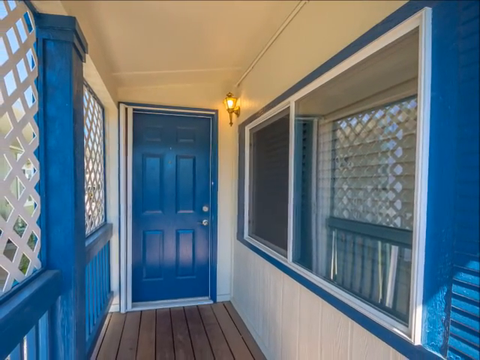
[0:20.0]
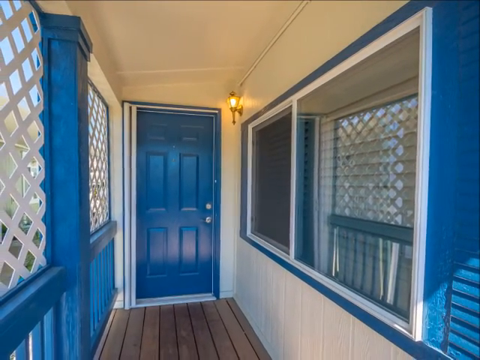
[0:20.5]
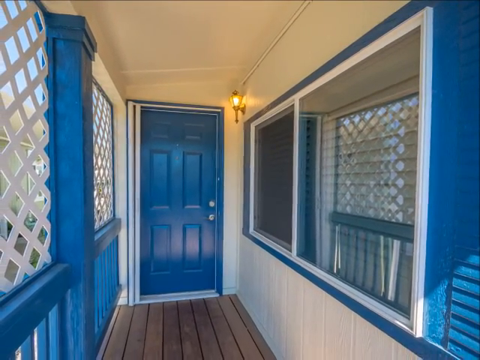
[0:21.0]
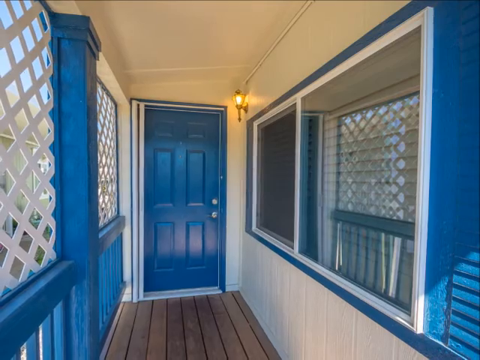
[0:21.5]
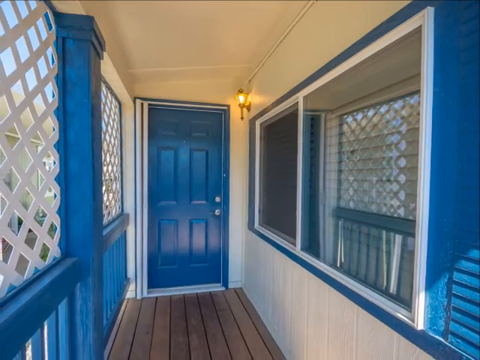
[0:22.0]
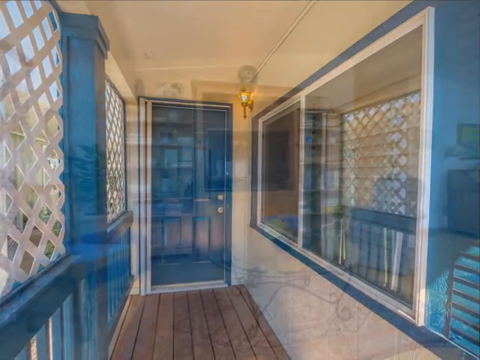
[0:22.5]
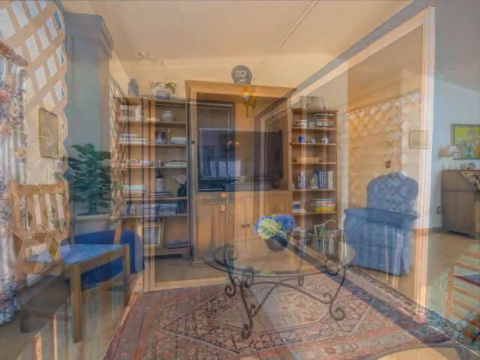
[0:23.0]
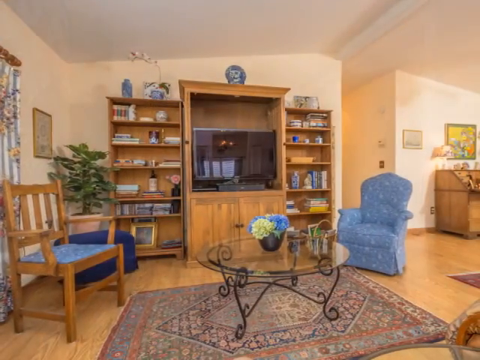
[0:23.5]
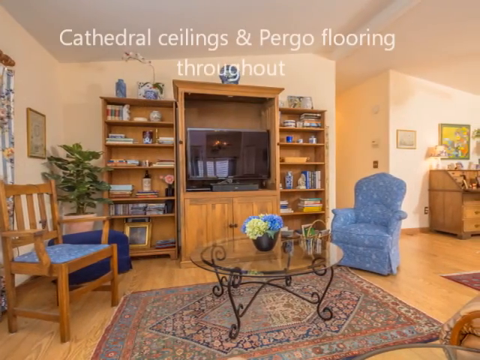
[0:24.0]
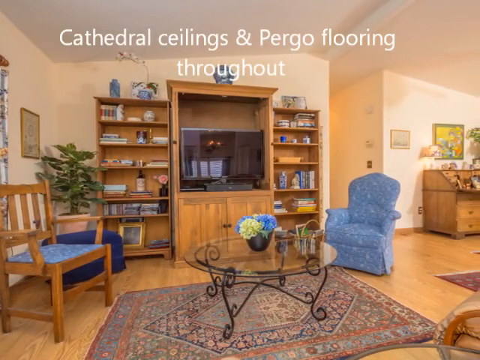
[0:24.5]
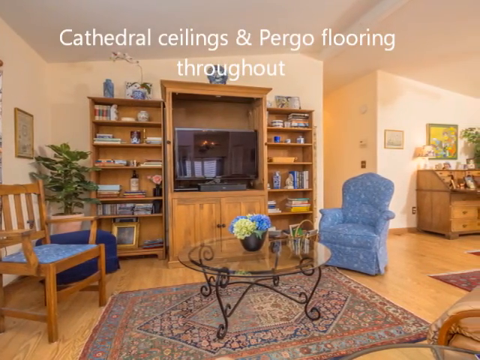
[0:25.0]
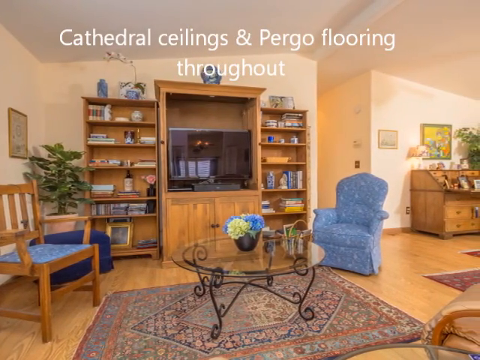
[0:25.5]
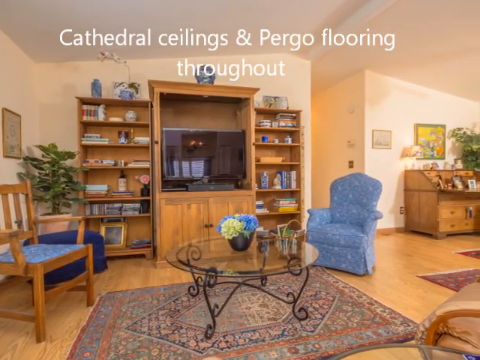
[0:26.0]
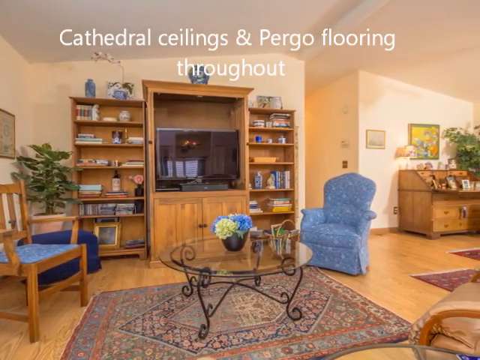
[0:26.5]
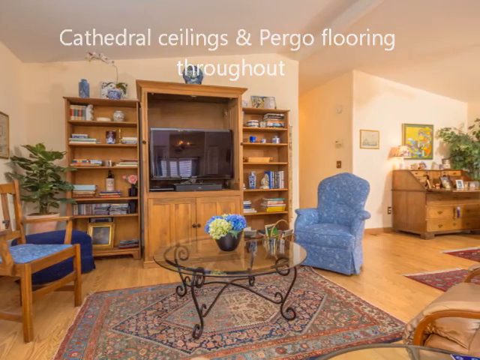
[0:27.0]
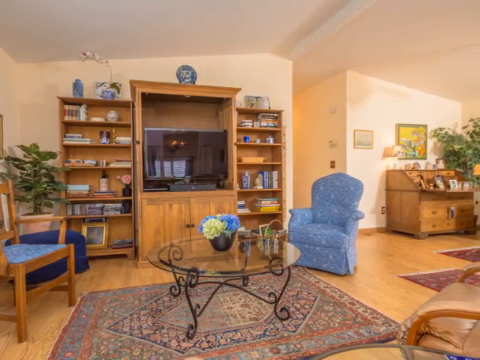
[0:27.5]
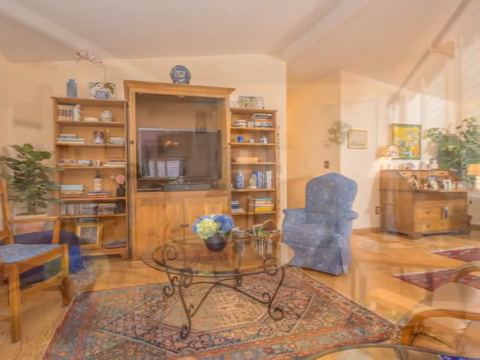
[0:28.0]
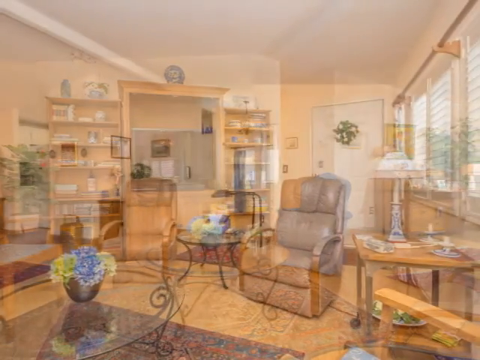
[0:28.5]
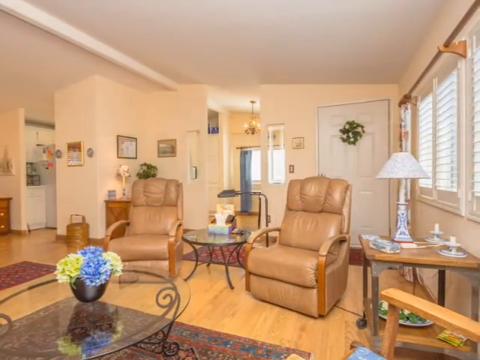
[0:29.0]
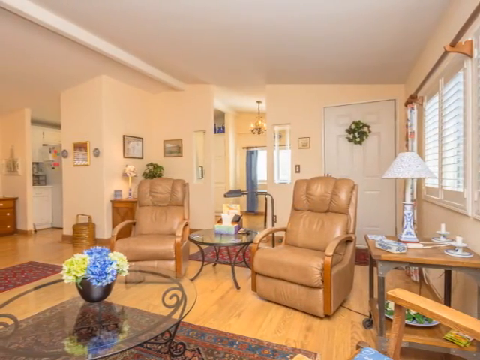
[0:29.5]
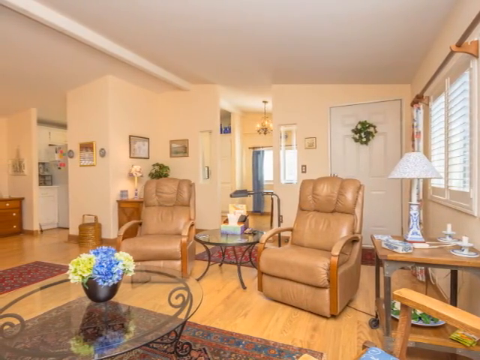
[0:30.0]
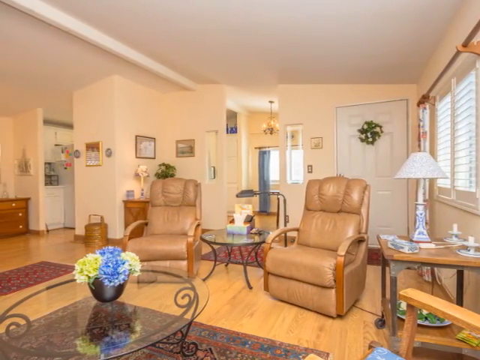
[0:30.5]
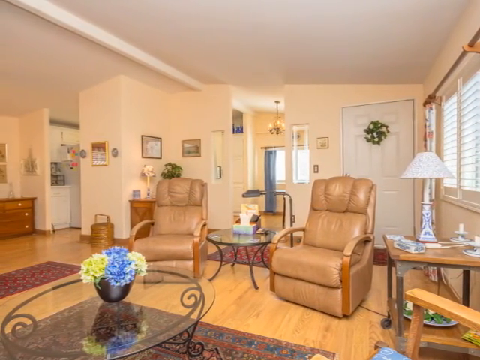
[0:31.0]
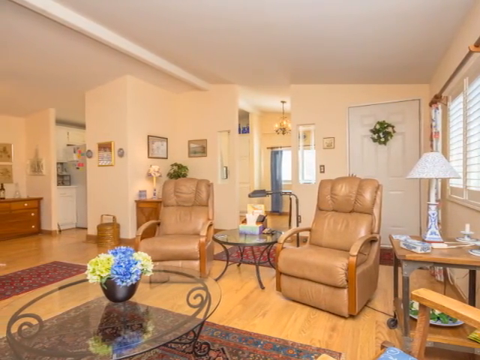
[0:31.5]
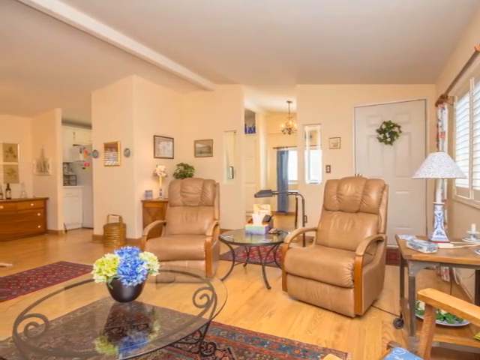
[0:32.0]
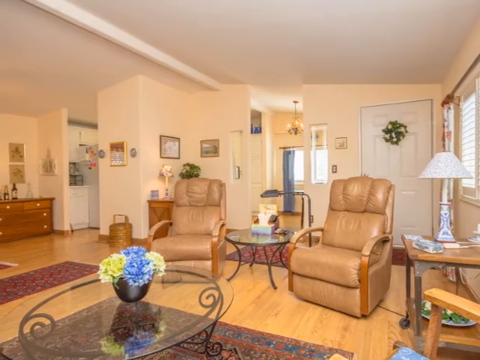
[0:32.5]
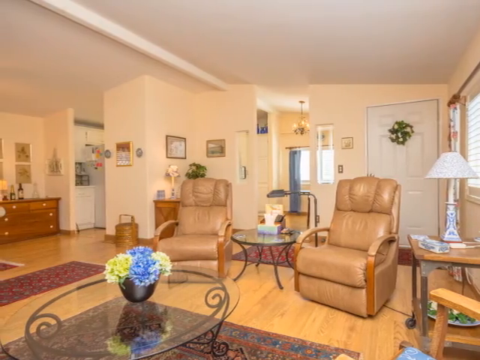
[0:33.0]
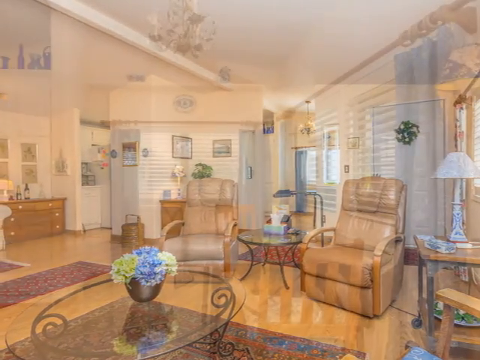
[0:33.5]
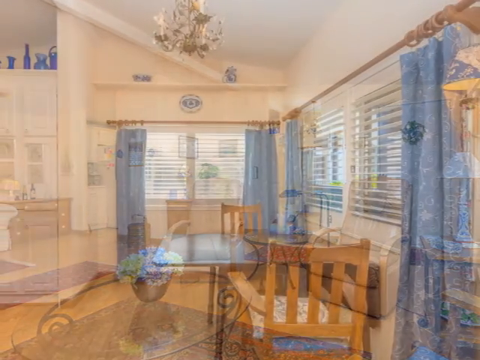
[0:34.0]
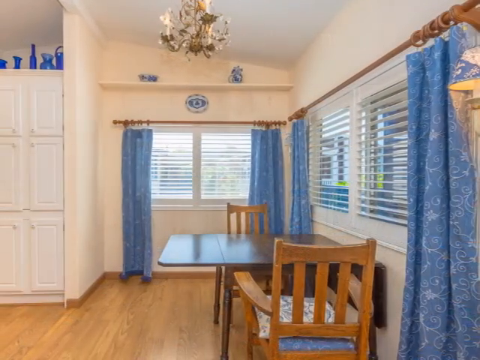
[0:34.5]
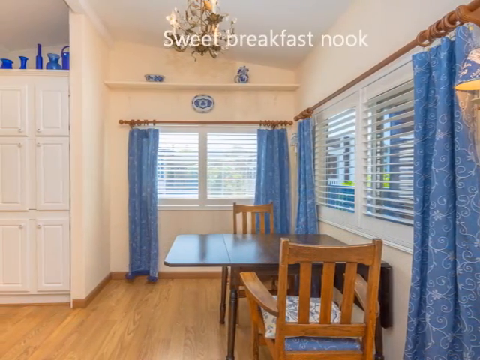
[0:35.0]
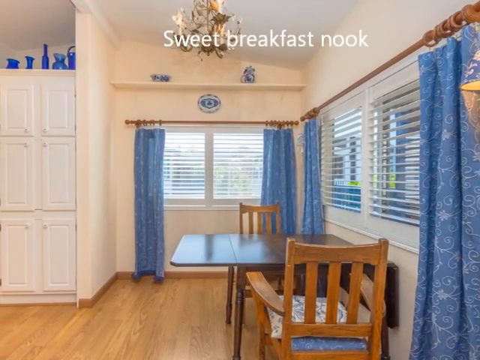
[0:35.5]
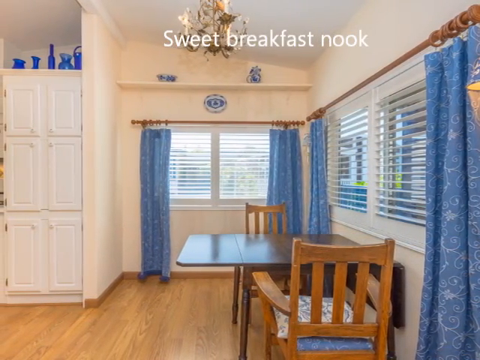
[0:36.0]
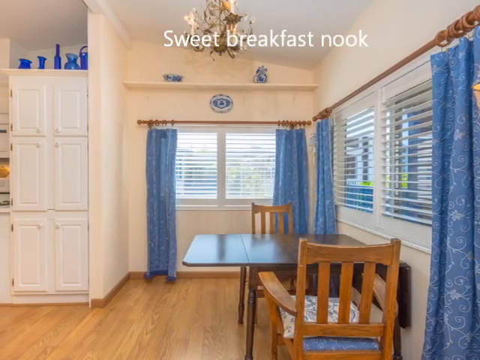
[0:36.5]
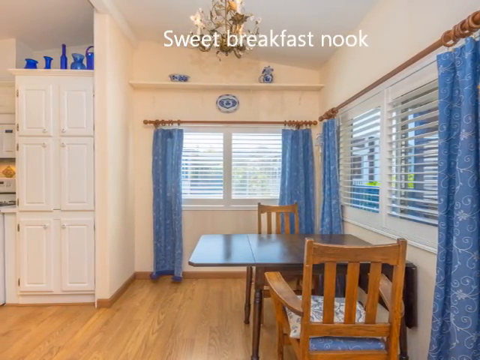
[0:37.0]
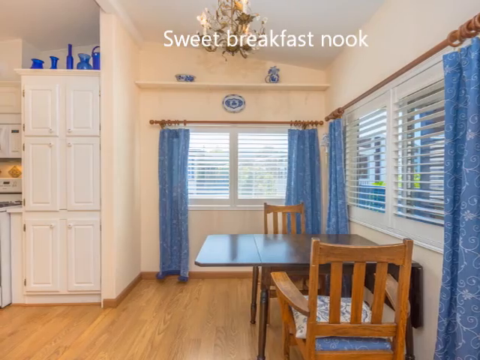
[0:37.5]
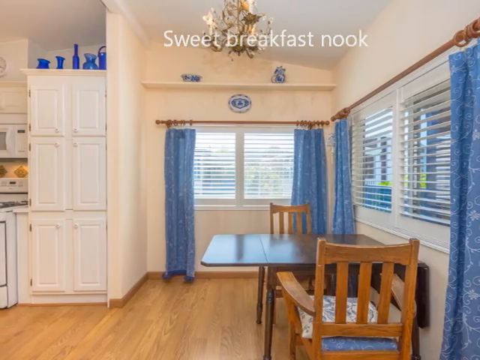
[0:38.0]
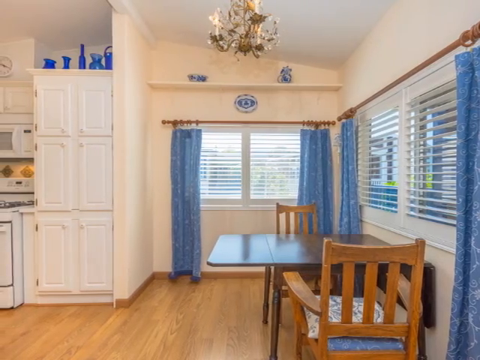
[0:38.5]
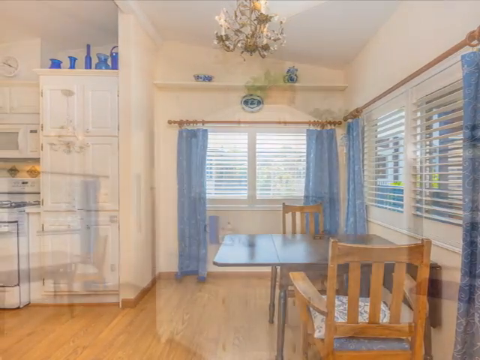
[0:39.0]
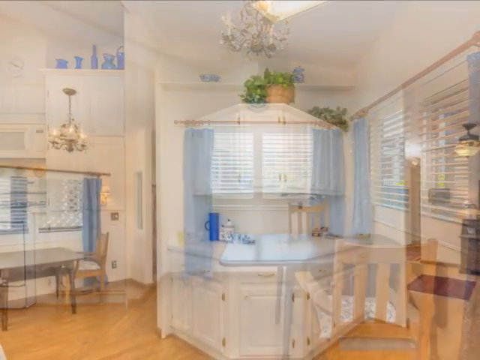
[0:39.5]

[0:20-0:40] Inside the house, the home has cathedral ceilings and pergola flooring throughout. The view moves from the living room, which appears to be a decent size, to what appears to be a seating area. Moving from left to right, there is a small area in the kitchen with room for a small kitchen table. The kitchen cabinets appear to be white with white countertops, and on the outside of the building there is a bright blue door. There appears to be a small hallway, and the walls appear painted a light beige or light tan. In one area the kitchen cabinets appear to go three high, and the appliances may be white as well; a white microwave is visible in the background along with a white stove. A chandelier hangs over the dining room or kitchenette area, with windows on either side of where the table is set up. A small shelf is above one of the windows, and the ceiling looks to slant slightly on either side, rising to a point in the middle.